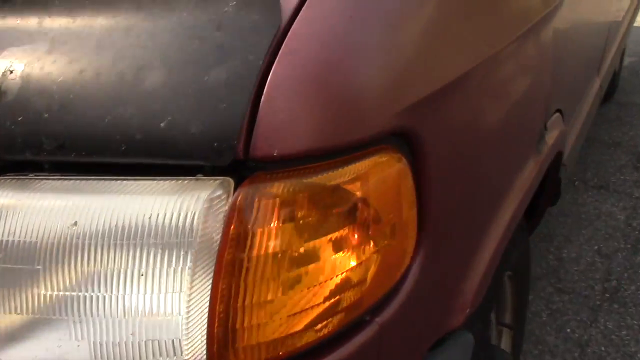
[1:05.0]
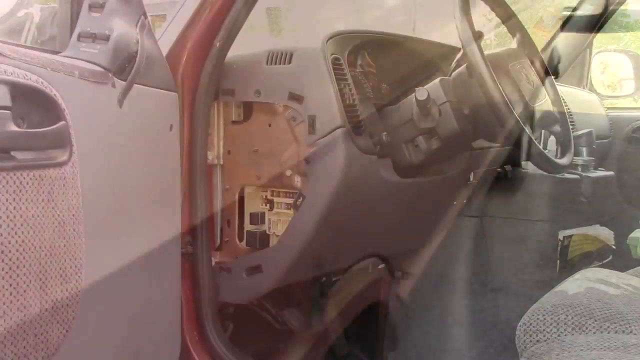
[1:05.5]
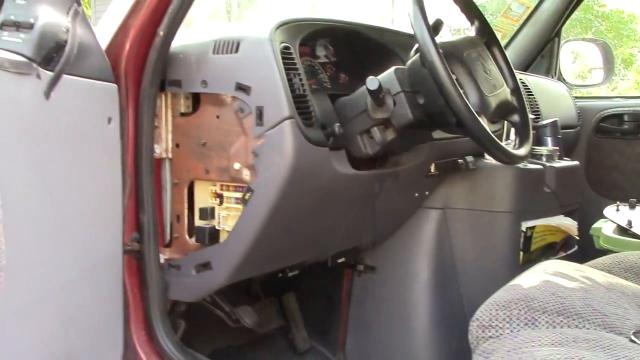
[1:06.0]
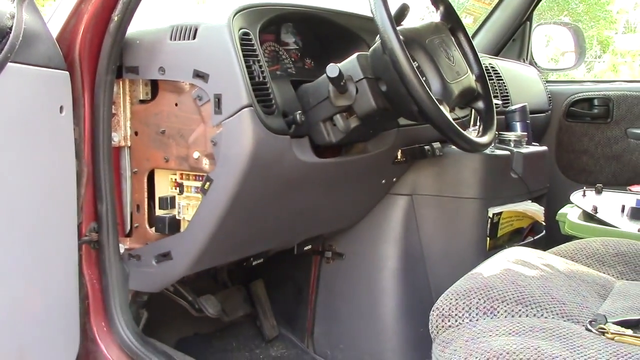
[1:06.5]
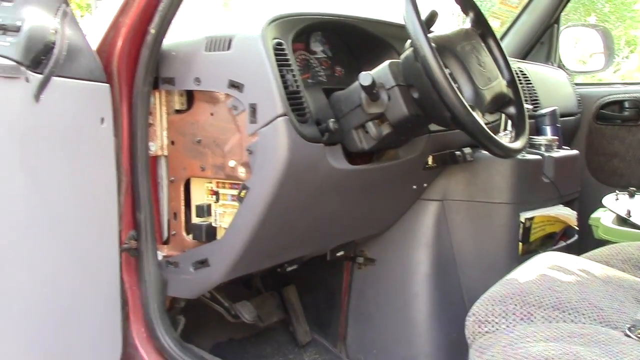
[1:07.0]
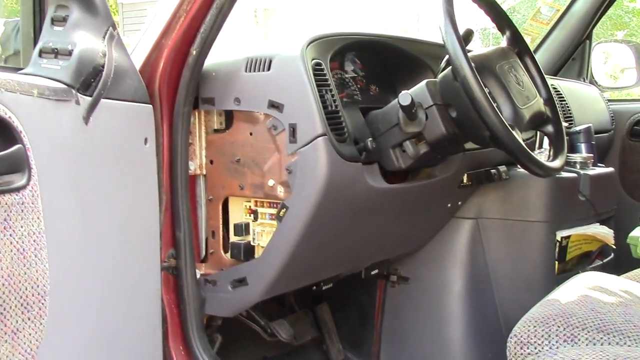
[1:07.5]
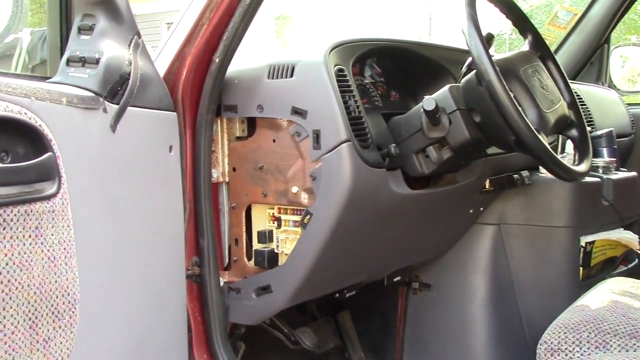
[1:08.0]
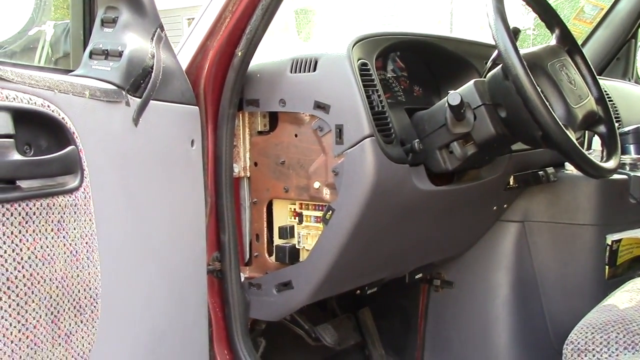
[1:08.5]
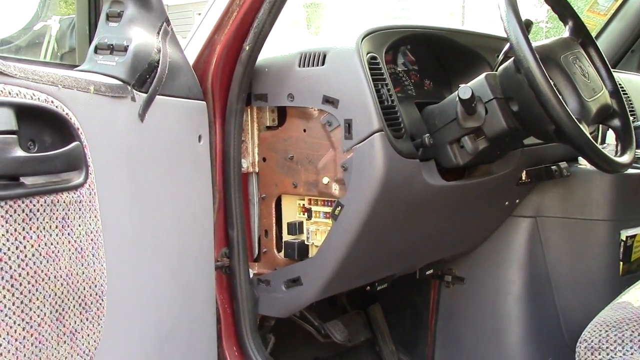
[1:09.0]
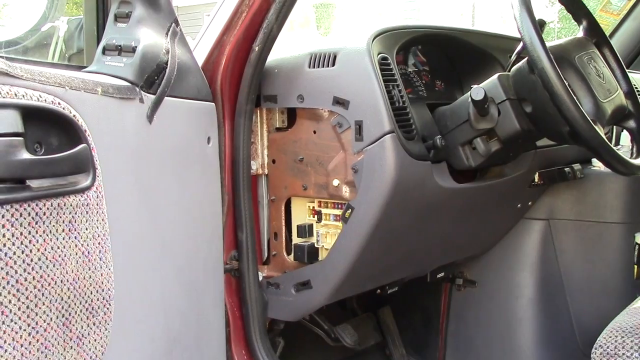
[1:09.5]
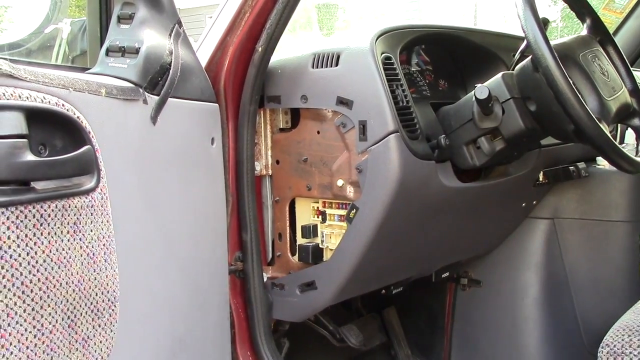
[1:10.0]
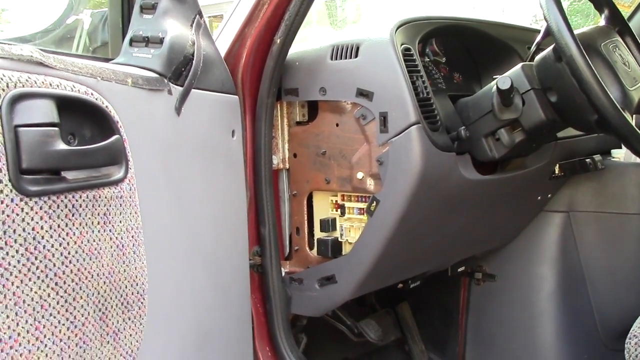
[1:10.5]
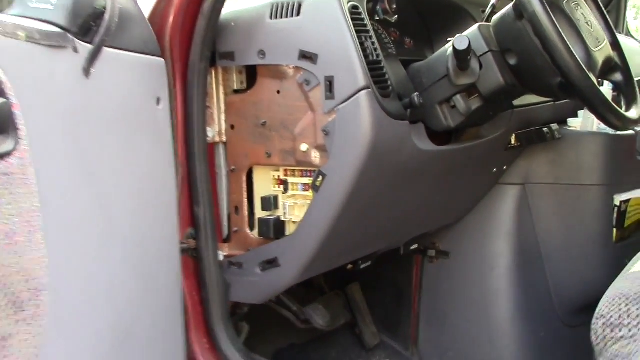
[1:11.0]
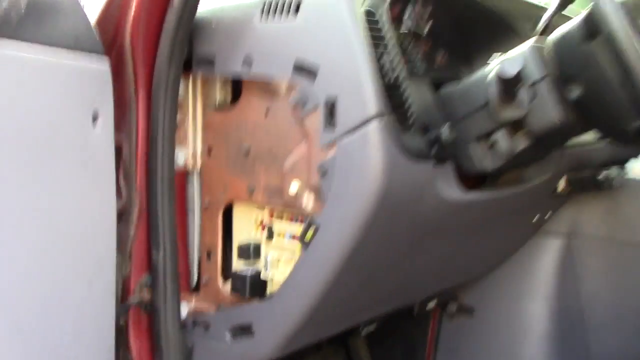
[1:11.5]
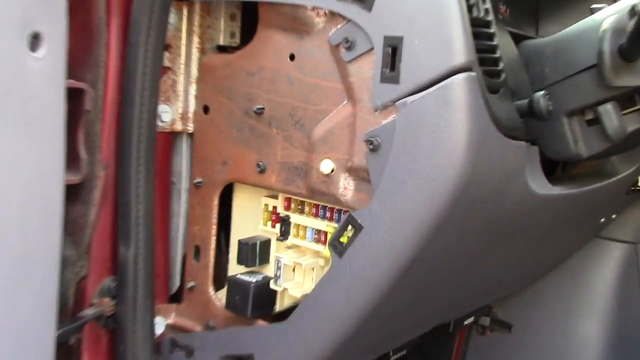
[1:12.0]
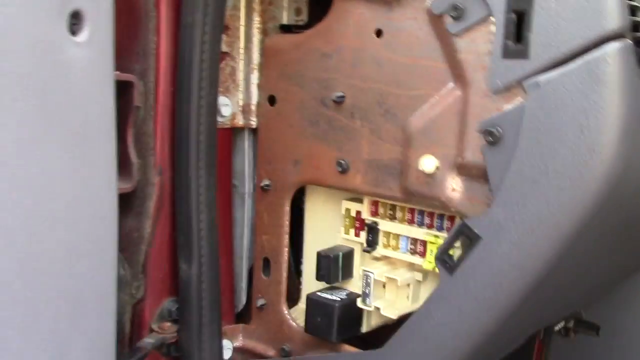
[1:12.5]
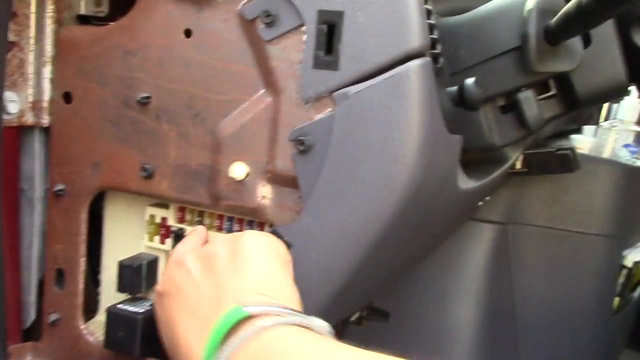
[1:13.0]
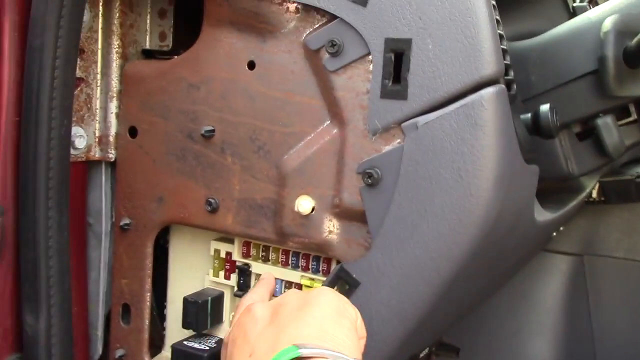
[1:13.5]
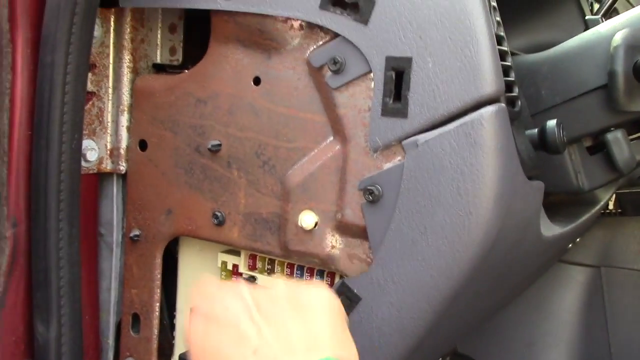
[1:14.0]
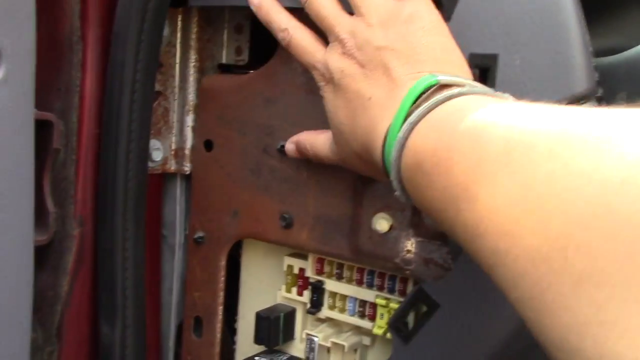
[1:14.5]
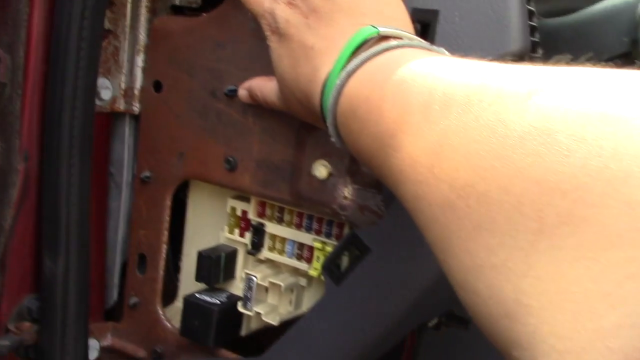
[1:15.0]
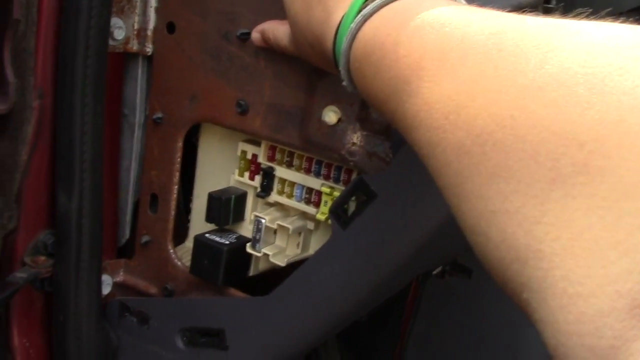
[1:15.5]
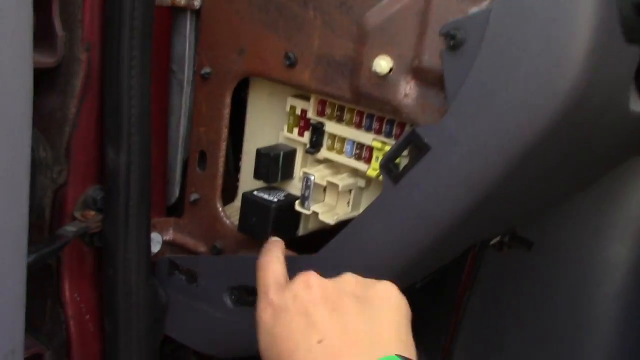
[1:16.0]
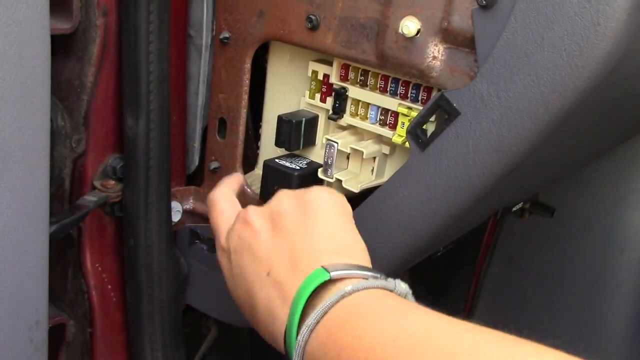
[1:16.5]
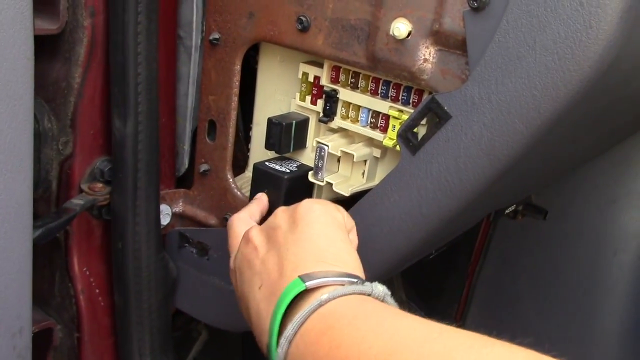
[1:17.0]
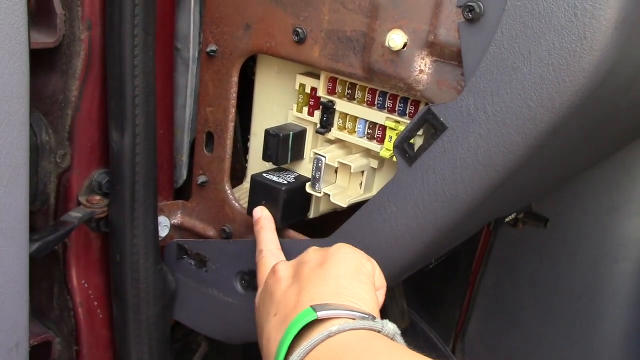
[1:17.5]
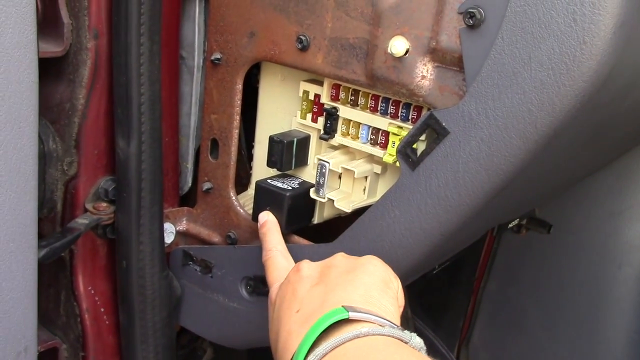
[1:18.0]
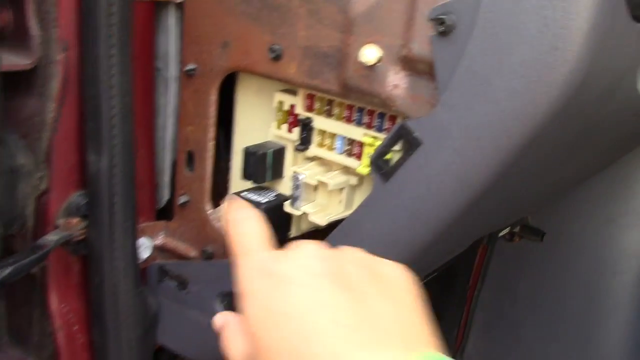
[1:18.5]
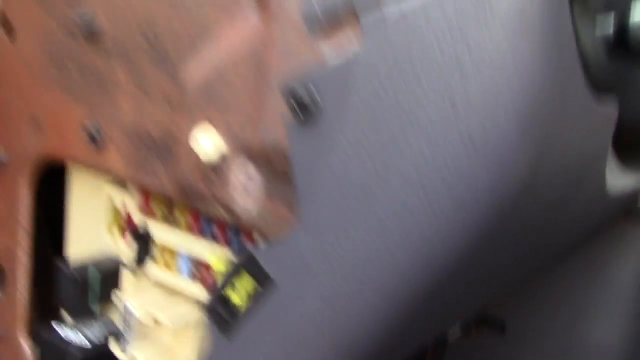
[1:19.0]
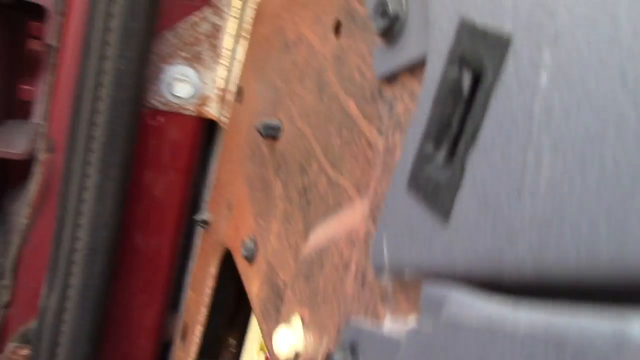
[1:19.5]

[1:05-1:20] The camera is still on the left headlight with the turn signal. Then the scene suddenly cuts to the inside of the truck, showing the wheel and the side of the dashboard facing the door, where a side panel has been removed so its inside is visible. The camera moves closer, and a hand points to the different colored buttons on the bottom half of the panel, then puts the hand above the bare top part of the panel, and then points to and taps twice on a black box below the colored buttons and panels.